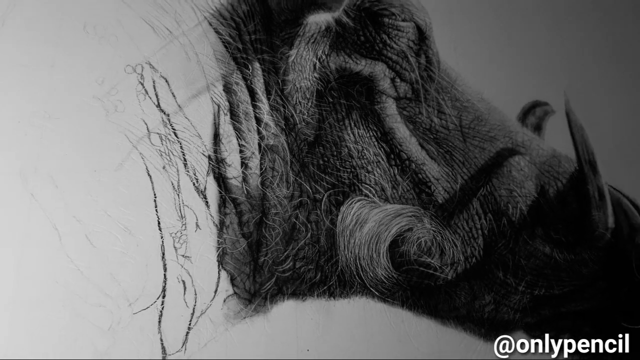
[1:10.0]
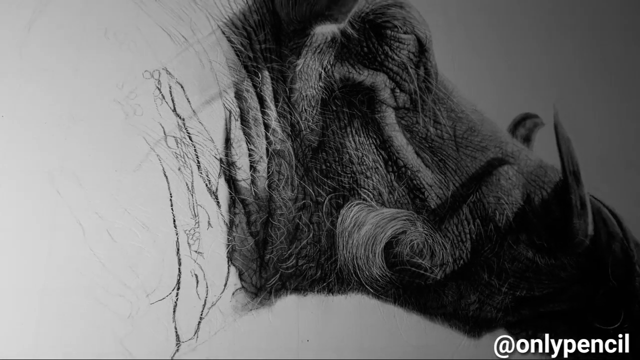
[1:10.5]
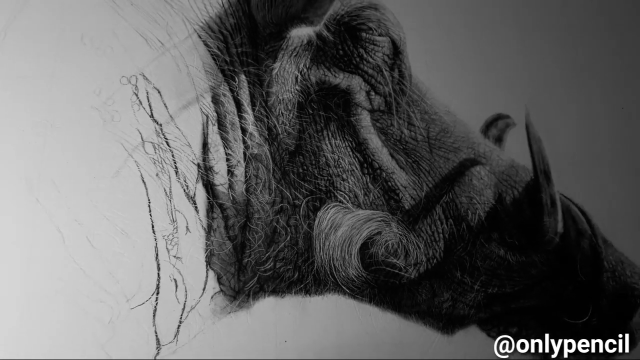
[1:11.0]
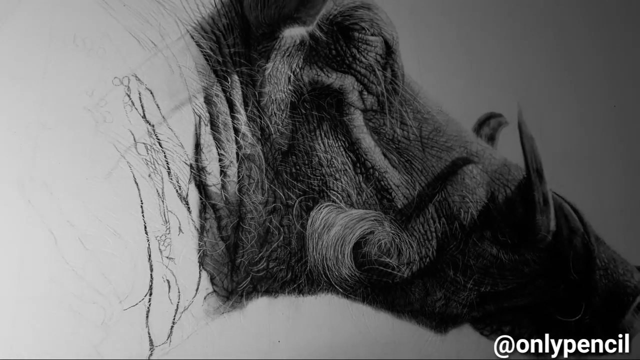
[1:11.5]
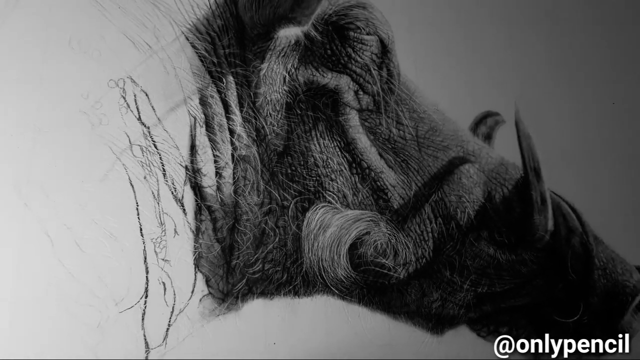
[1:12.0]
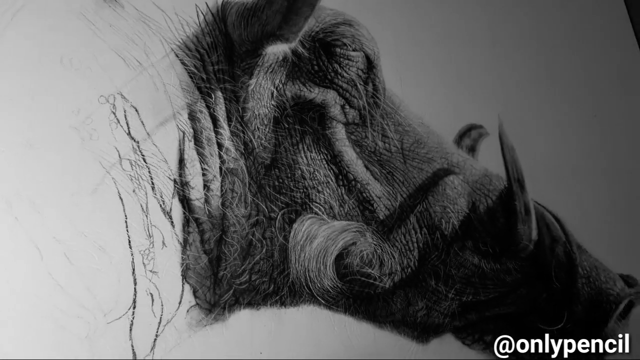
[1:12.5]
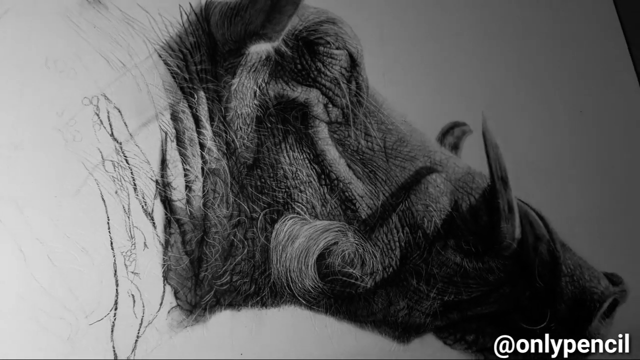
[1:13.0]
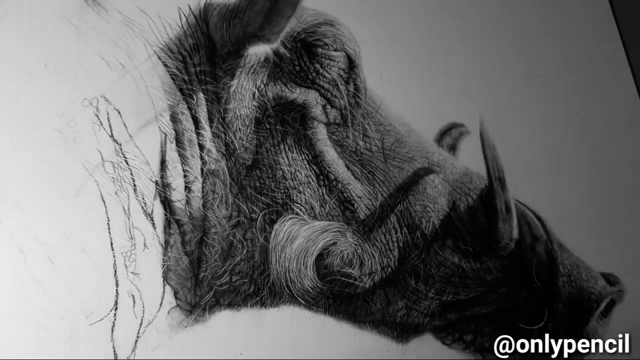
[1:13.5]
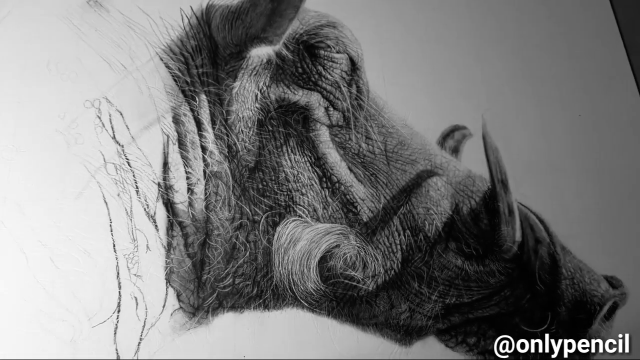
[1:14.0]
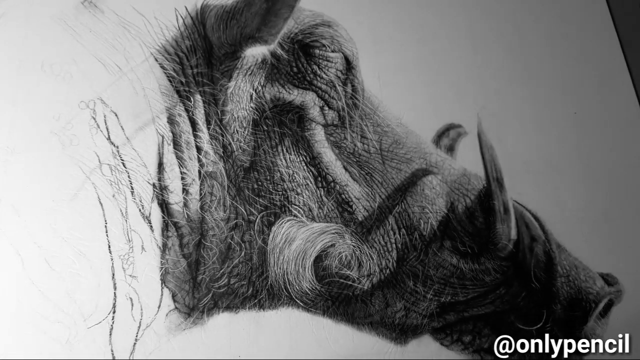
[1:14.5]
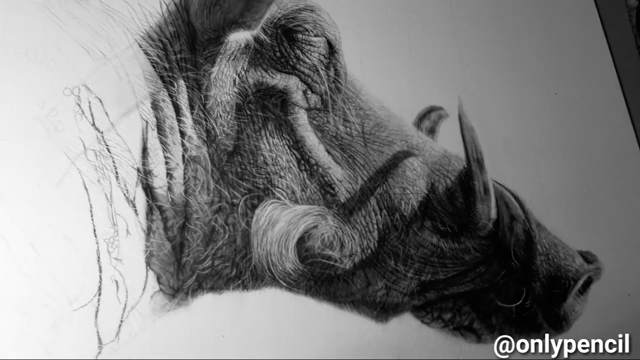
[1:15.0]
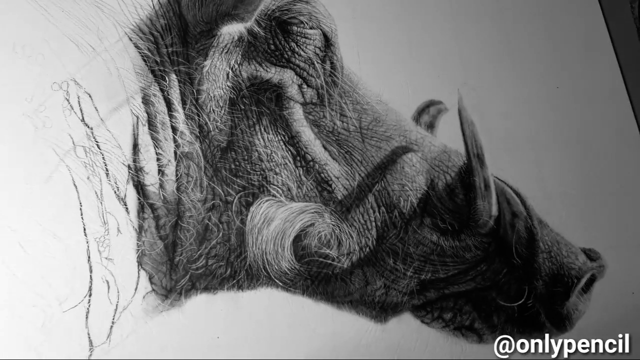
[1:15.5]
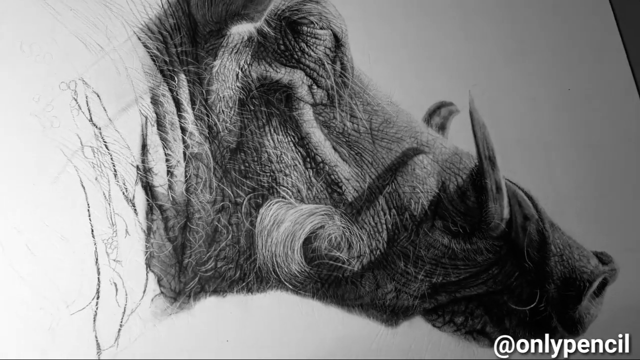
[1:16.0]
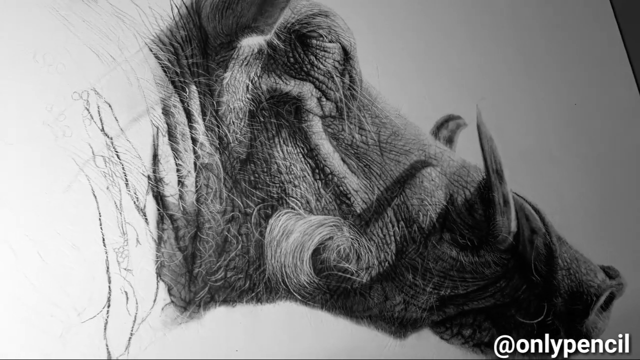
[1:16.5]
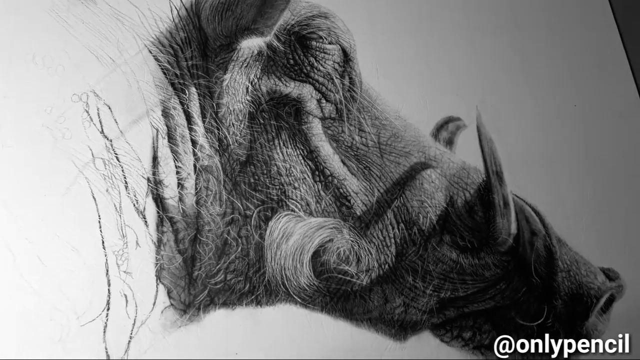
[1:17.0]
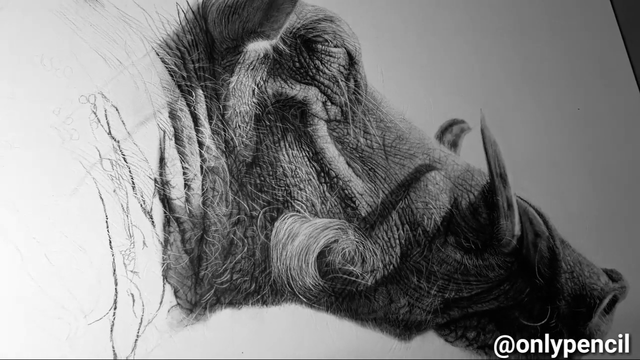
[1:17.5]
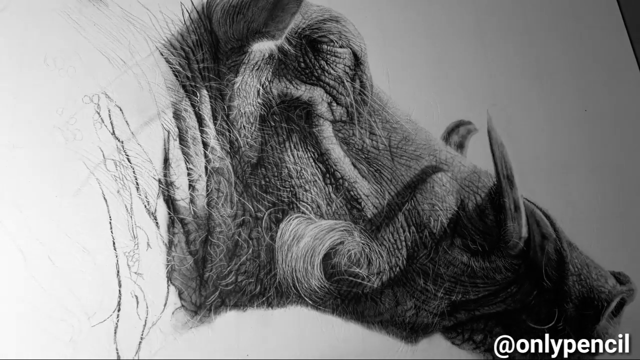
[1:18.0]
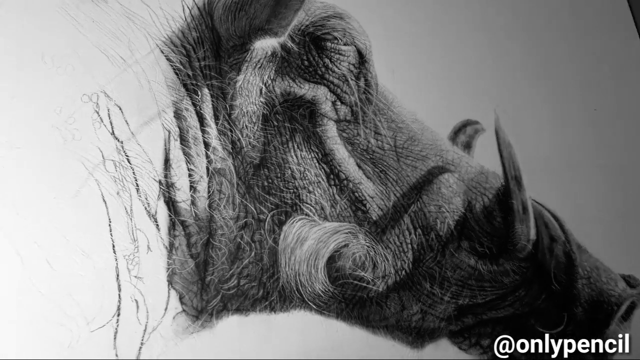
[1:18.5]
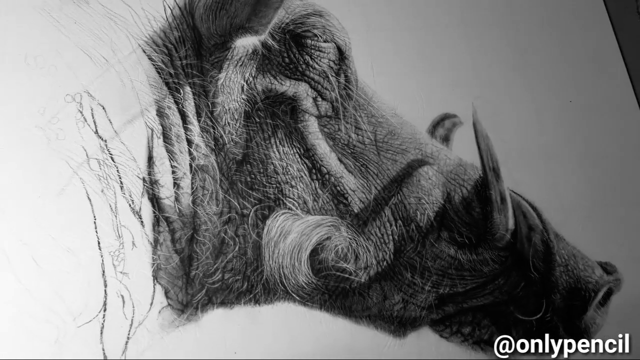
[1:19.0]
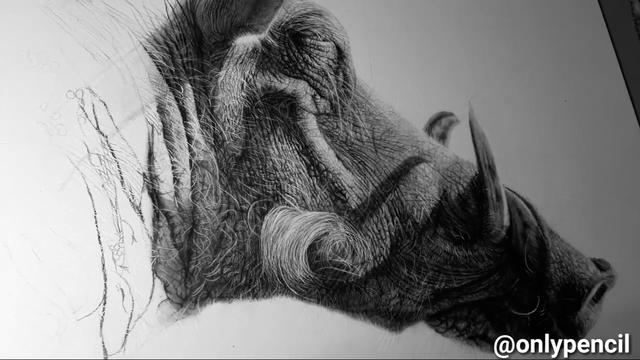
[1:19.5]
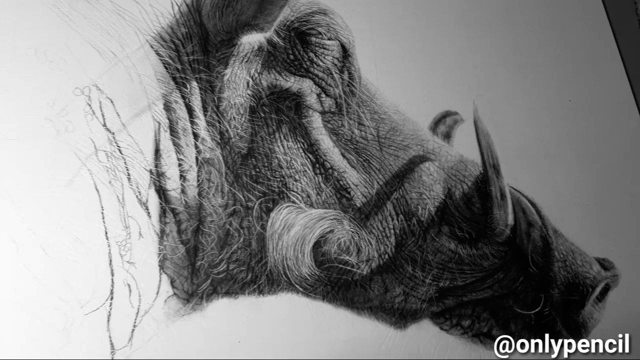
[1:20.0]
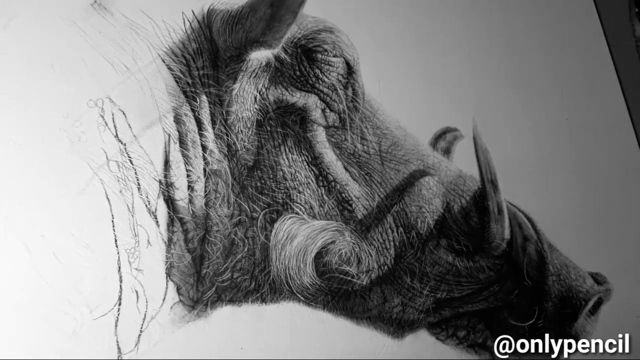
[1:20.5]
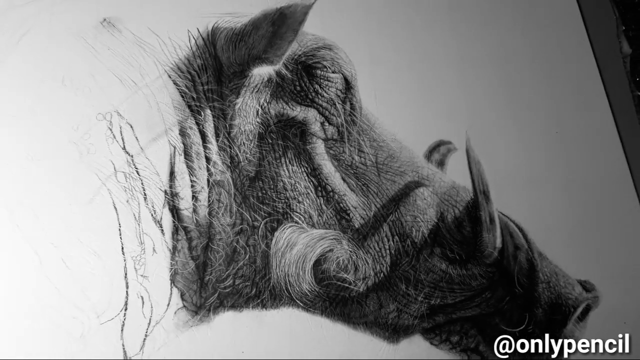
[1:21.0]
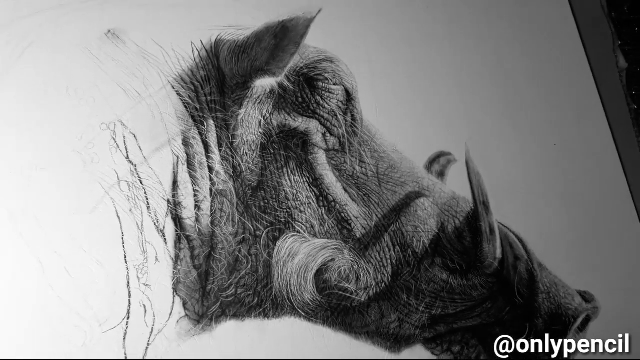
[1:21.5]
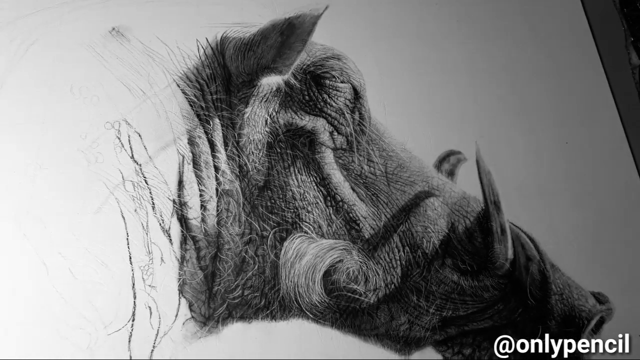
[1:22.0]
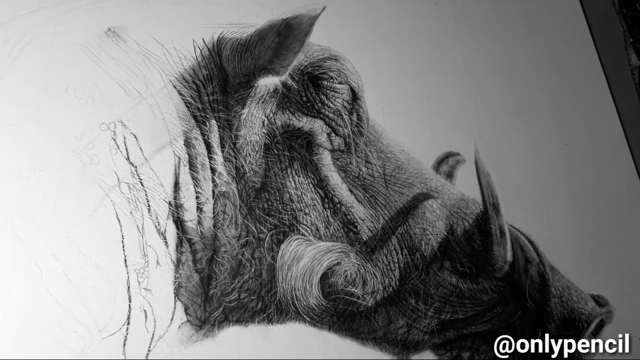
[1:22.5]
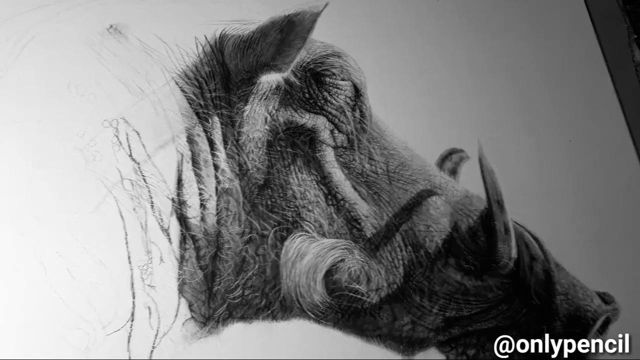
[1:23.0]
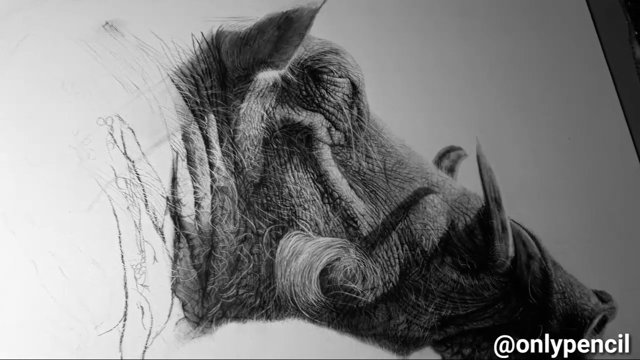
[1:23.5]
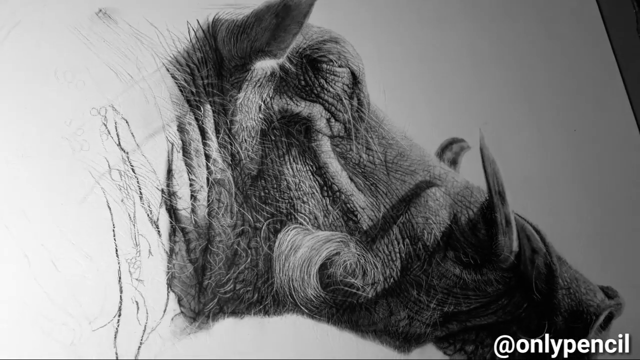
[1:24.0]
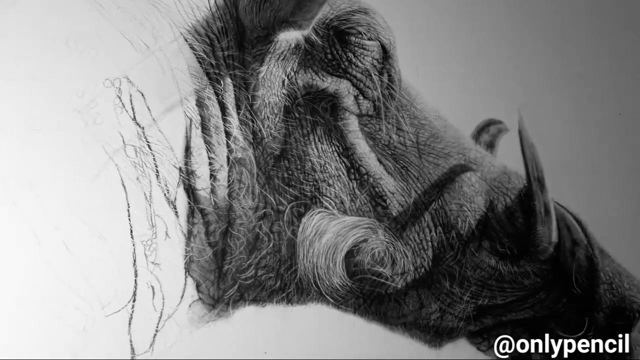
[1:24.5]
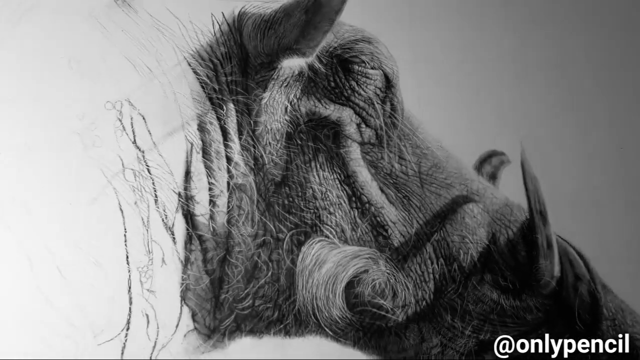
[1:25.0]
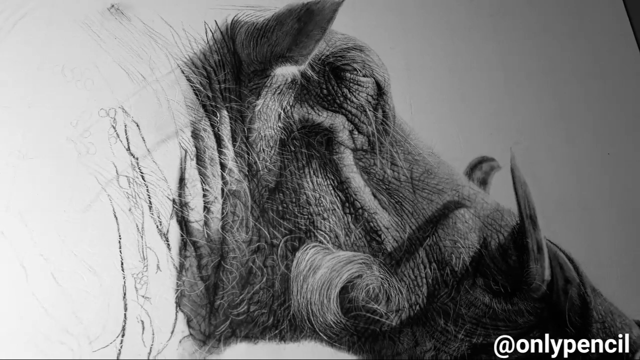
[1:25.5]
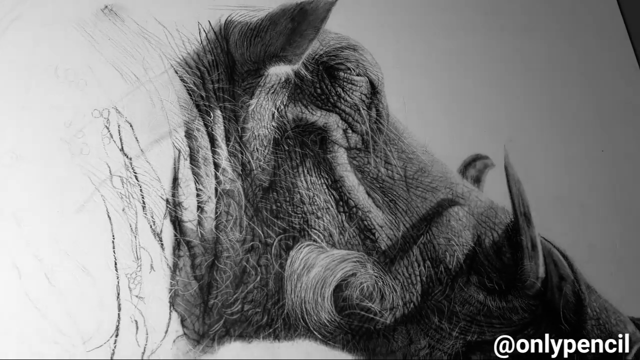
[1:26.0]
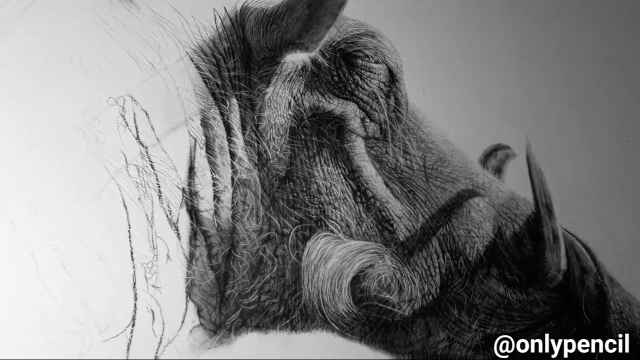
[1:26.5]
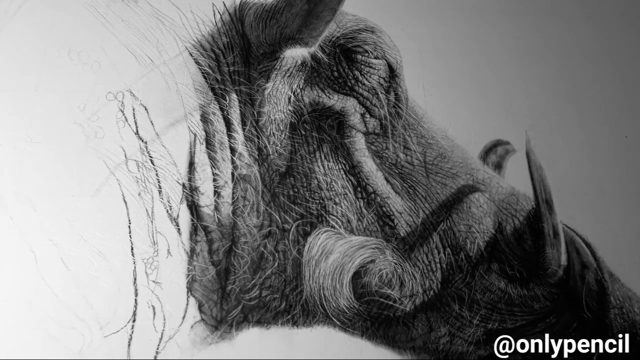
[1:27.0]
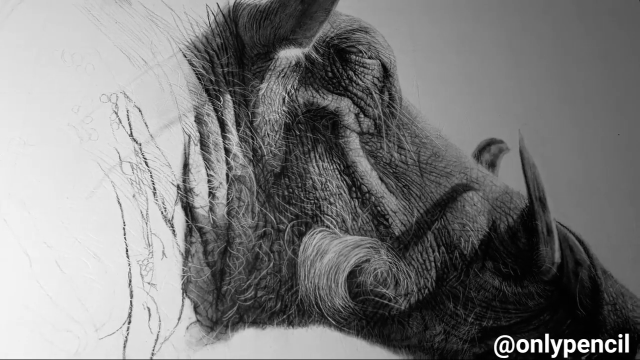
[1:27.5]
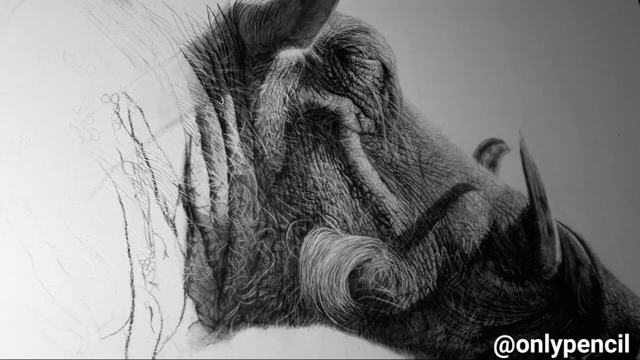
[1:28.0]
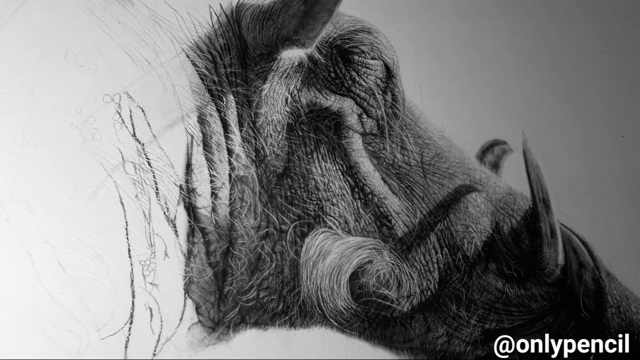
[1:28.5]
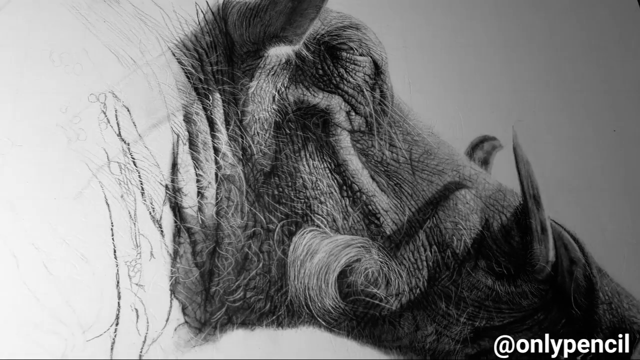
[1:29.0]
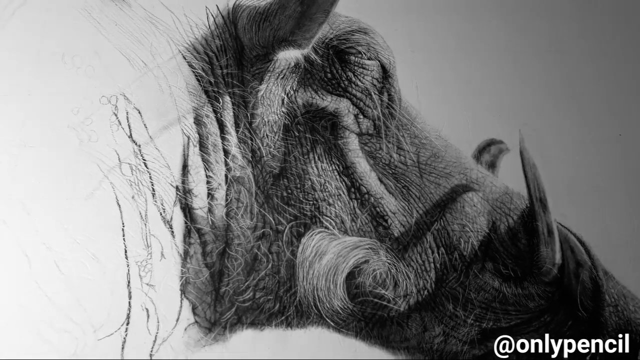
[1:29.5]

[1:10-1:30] Text reading "@ only pencil" in white lettering is in the bottom right corner. The camera pans out far enough that the tip of the nose is barely visible, showing one of the nostrils, the wrinkles between the nostrils, and the horns on top of the nose. The ear points up just above the eye, and a small flap comes down covering the beginning of the ridge. The camera shakes a little, then moves in closer, with the tip of the nose off screen in the bottom right corner. The eye is closed, with hair around and under it, and heavy wrinkles cover the whole head. The ridge comes off just below the small flap of hair hanging below the ear; it looks almost like the raised hump left where a gopher has tunneled through the ground, on the side of the face. It comes over about an inch to just below the eyeball and angles down to the right. There is a flap of some sort there, with a lot of heavy white hair on its left side, which then goes up to the right, stopping just short of the top of the nose.